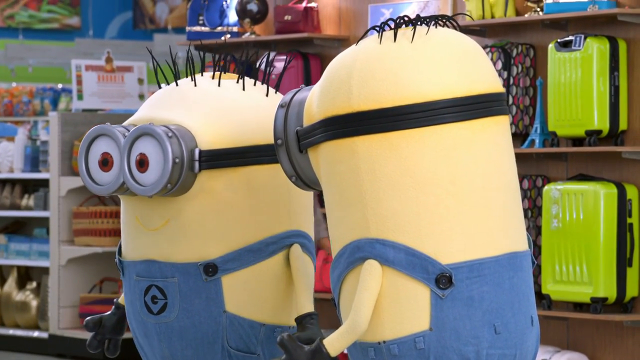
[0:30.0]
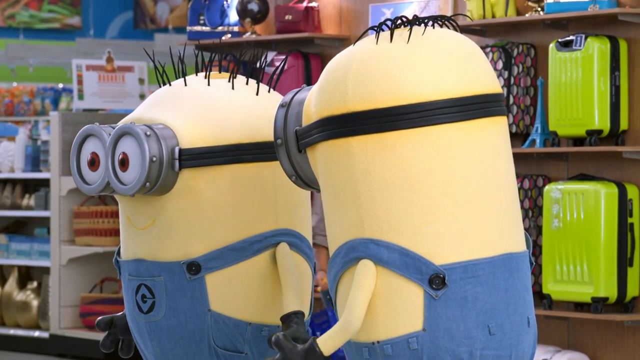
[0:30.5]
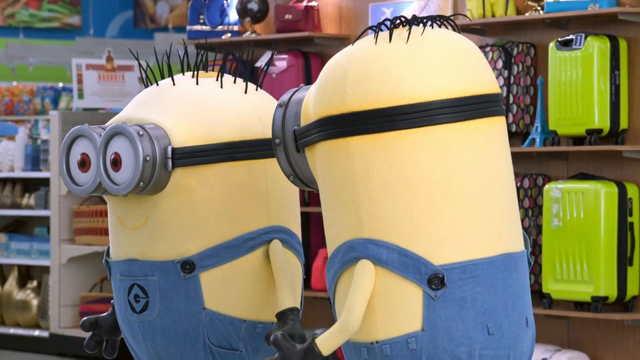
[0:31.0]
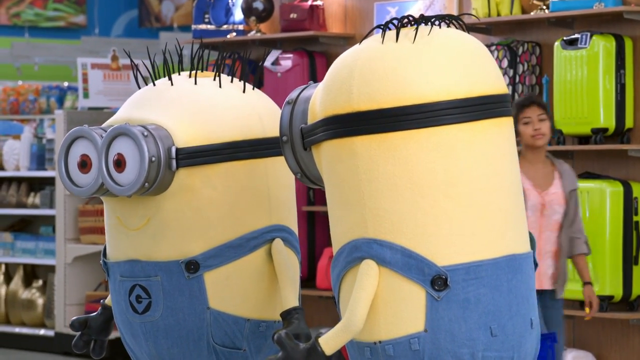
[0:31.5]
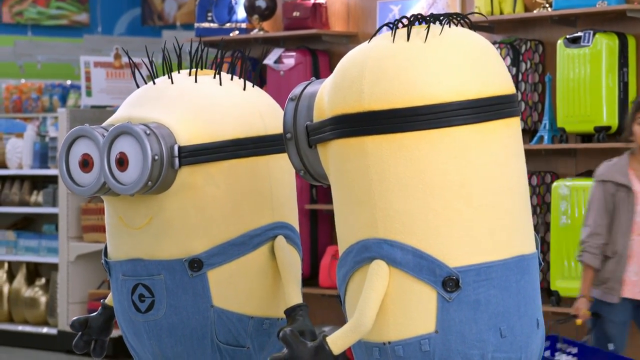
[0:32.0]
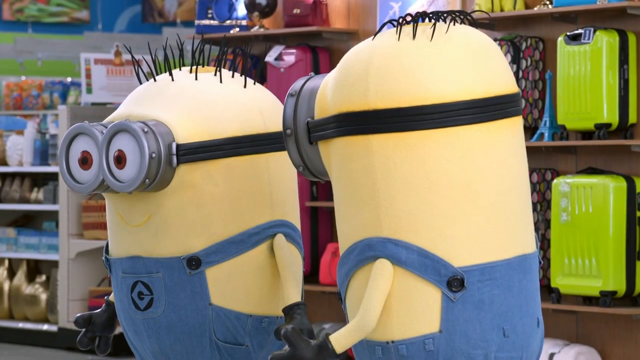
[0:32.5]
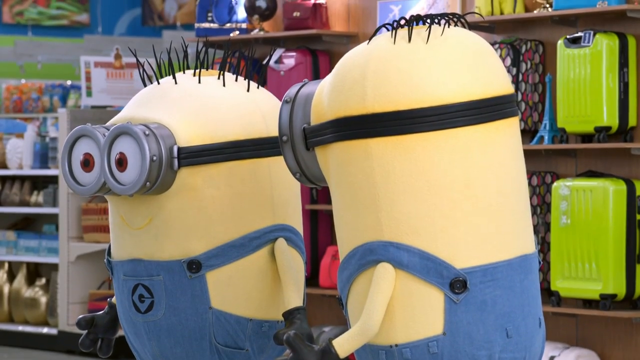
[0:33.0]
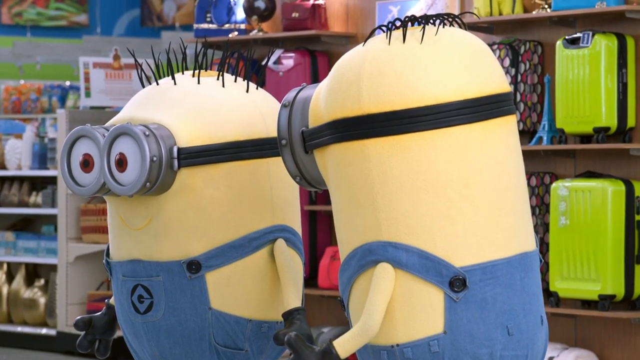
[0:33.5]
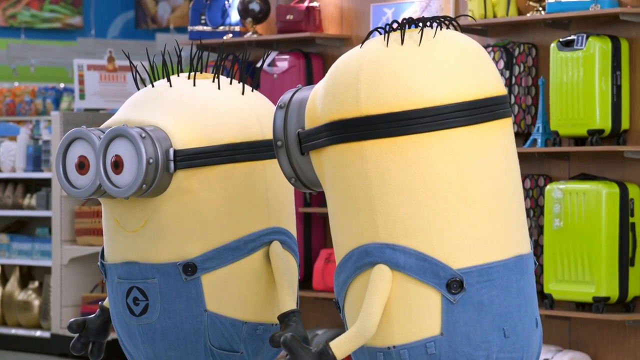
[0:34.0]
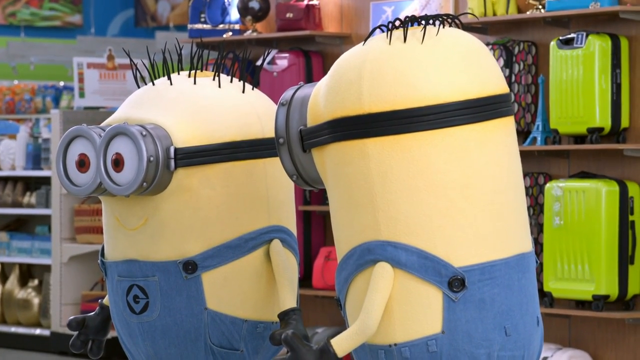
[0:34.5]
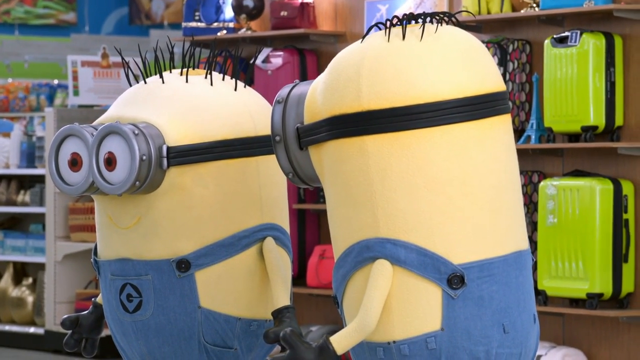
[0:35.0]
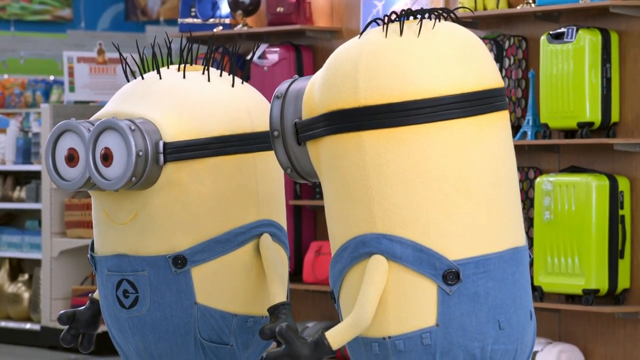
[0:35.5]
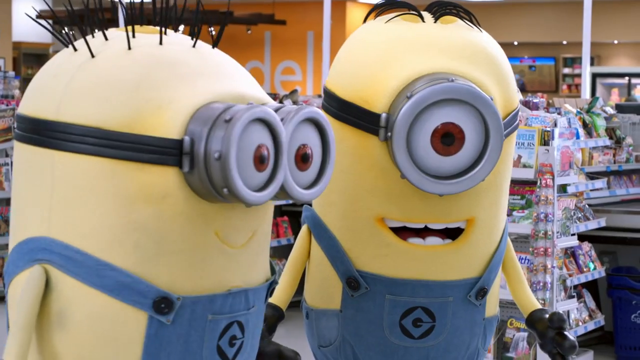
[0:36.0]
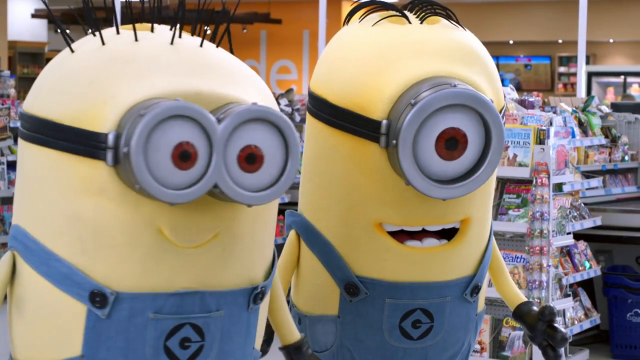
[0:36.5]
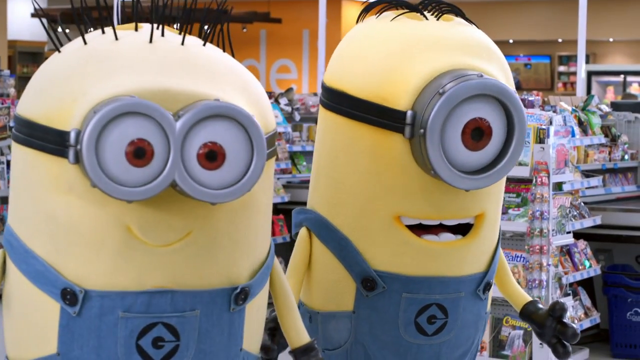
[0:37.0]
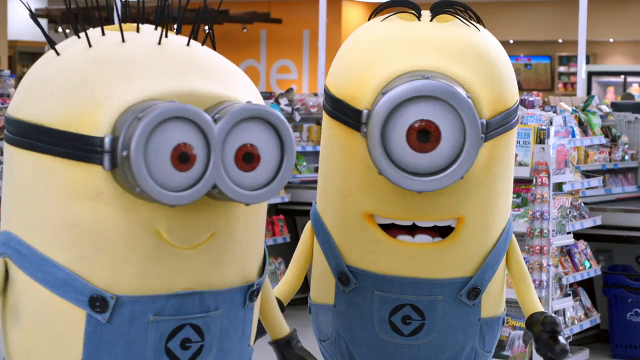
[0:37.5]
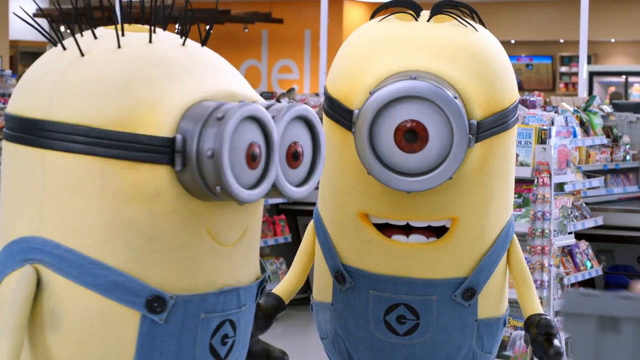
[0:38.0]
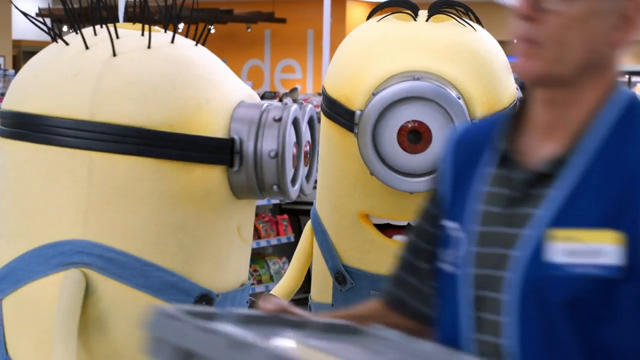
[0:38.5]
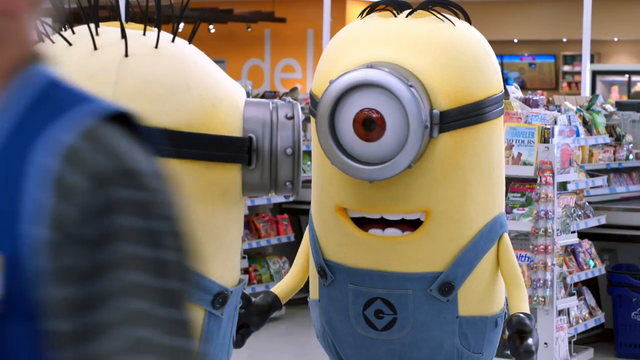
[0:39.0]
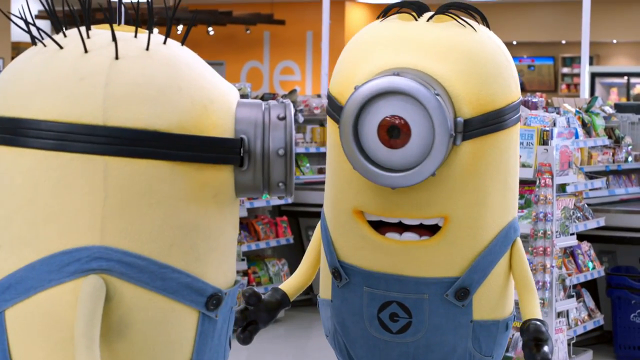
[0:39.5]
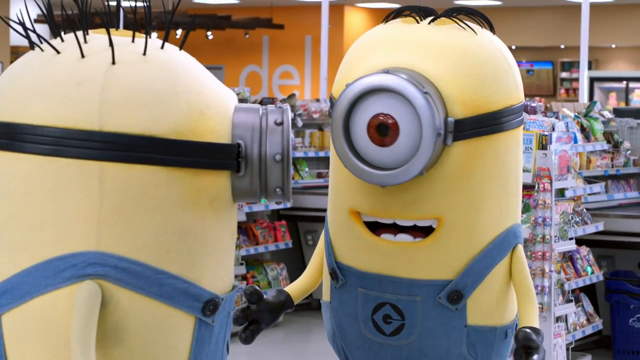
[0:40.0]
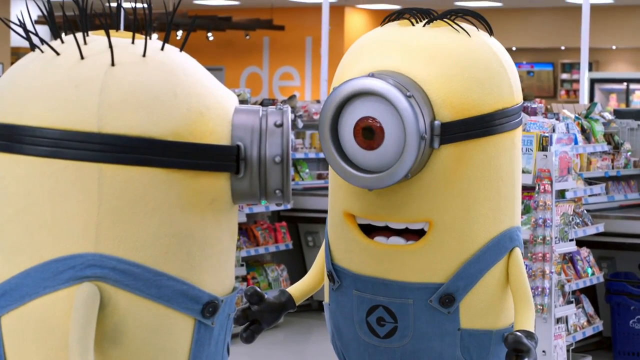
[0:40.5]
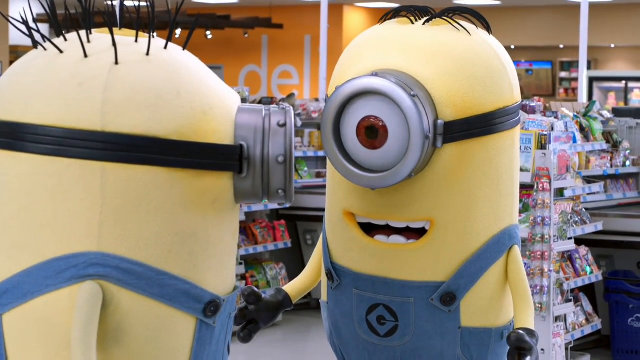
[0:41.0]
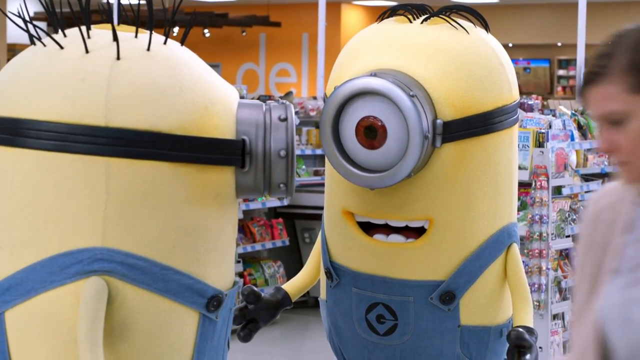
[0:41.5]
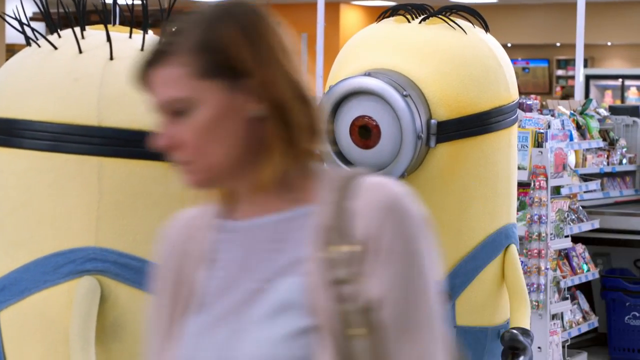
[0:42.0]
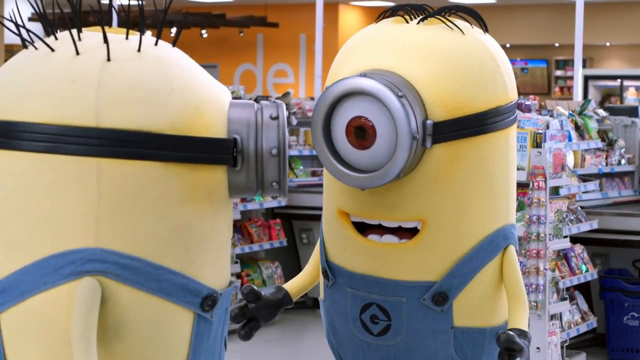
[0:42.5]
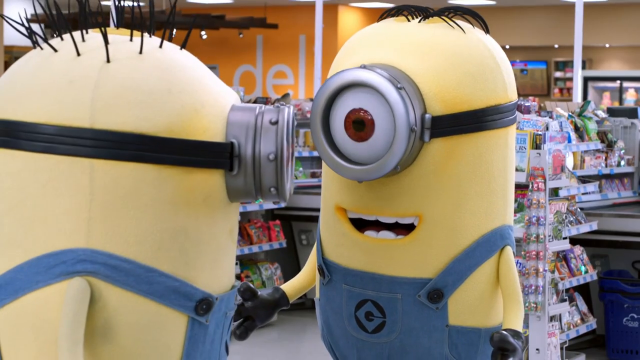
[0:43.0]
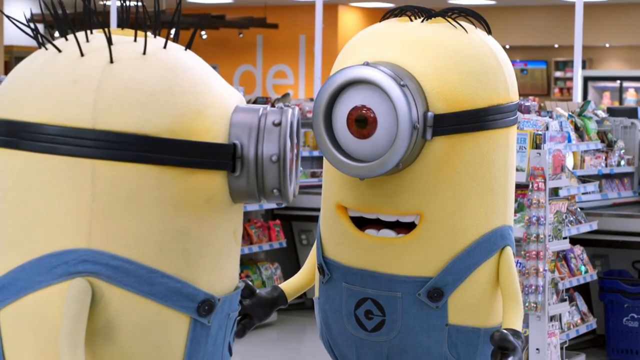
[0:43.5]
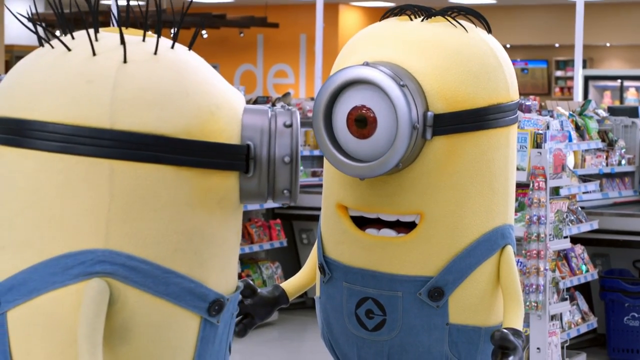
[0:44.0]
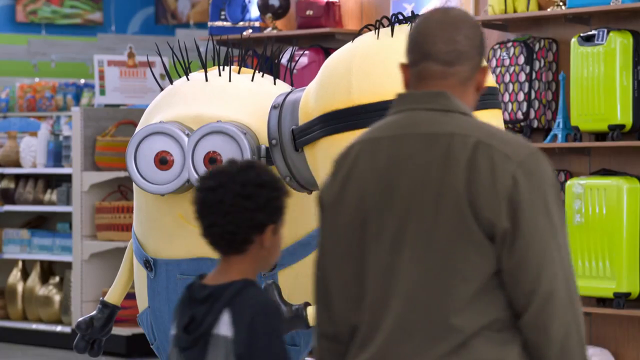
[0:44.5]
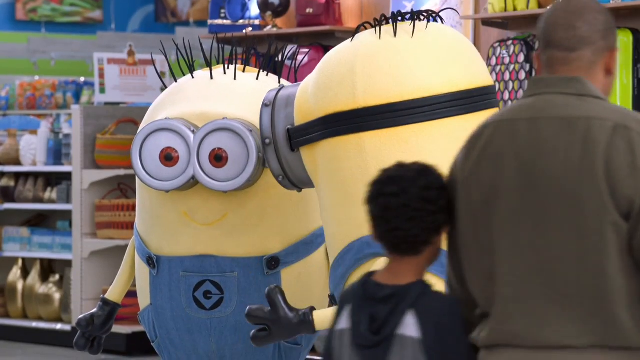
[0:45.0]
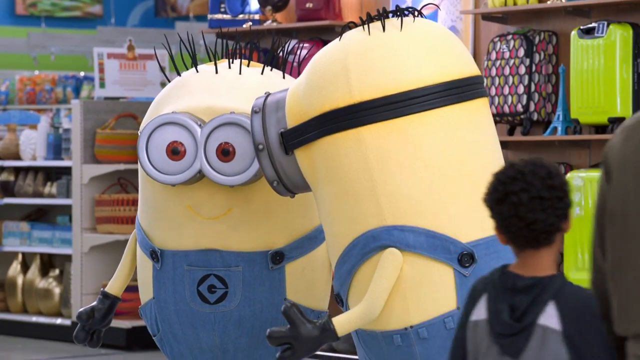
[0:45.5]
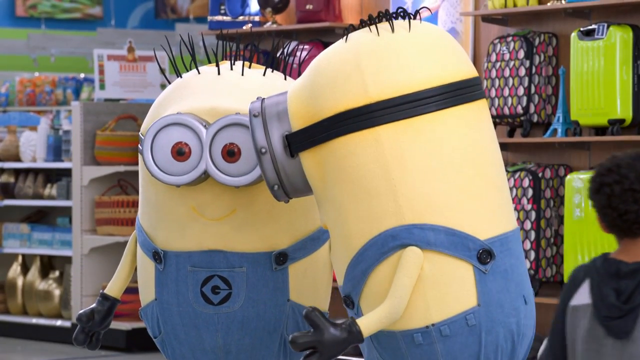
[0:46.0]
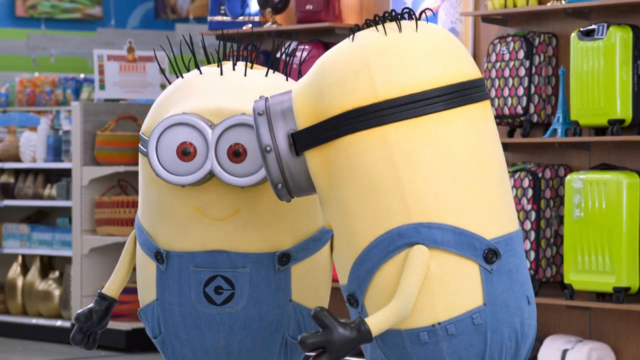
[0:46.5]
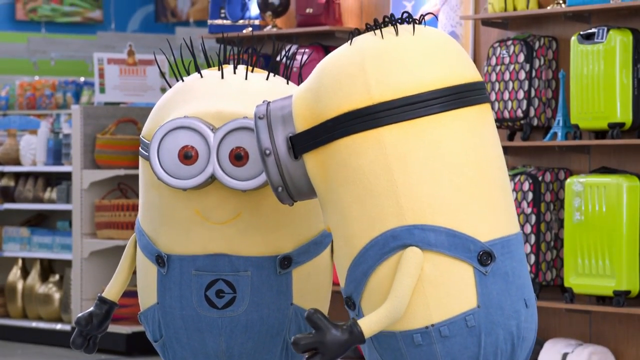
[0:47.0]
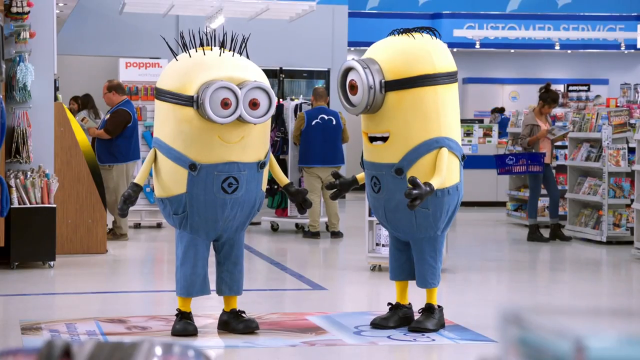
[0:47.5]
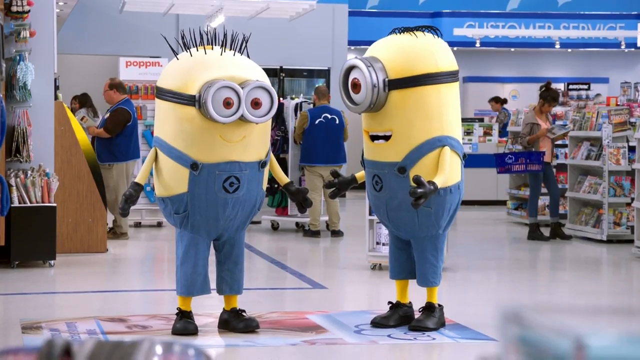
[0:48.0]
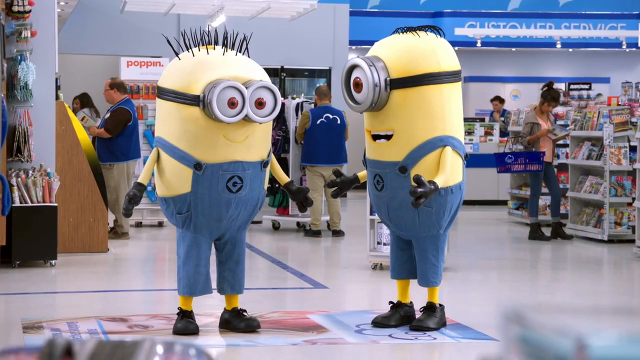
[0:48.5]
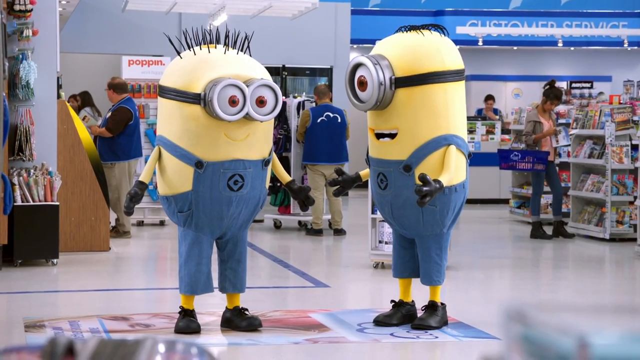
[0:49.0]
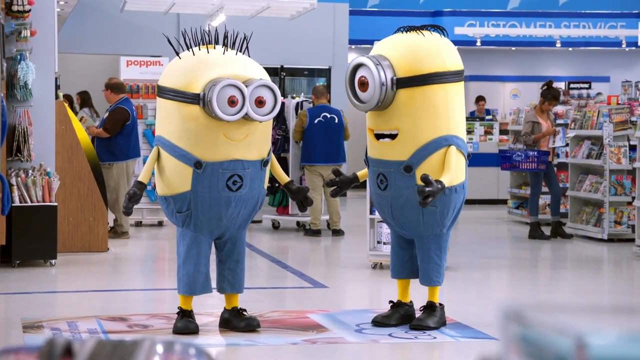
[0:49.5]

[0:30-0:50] Two minions stand in the middle of a store. Behind them are suitcases on a shelf, and also behind them there appears to be a checkout area with magazines and candy. There are shelves with other items for sale, and people walk around the minions in the store. Some appear to be customers and some appear to be store workers in blue vests. The customers include a young boy and his father, a young girl, and another lady with a purse. The minions appear to be looking at each other; one has two eyes and one has one eye. The workers' blue vests make it look kind of like it may be a Walmart, but the video says "Superstore" at the beginning. Woven baskets are also on a shelf behind them.